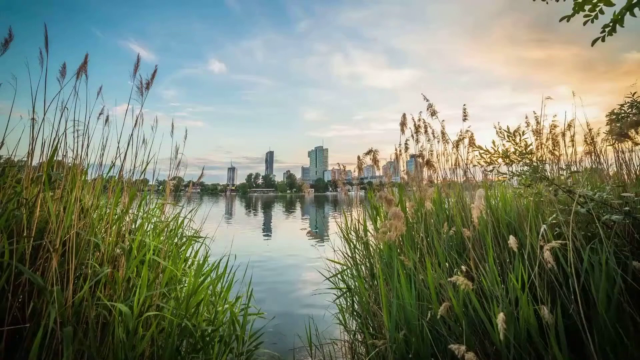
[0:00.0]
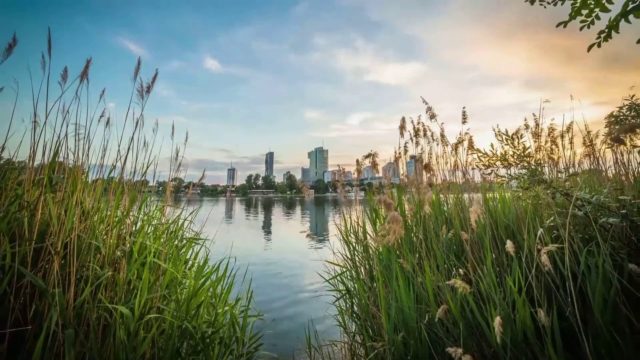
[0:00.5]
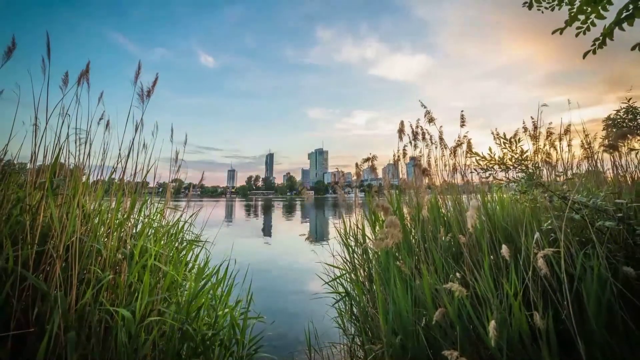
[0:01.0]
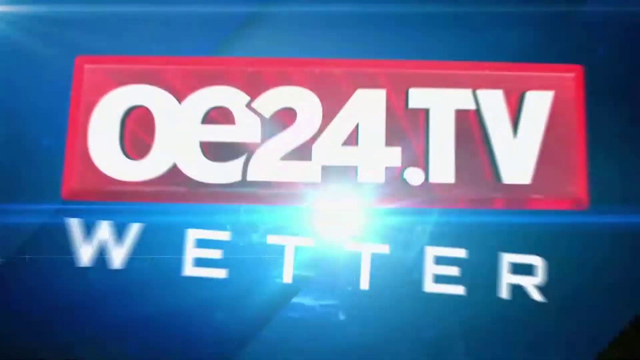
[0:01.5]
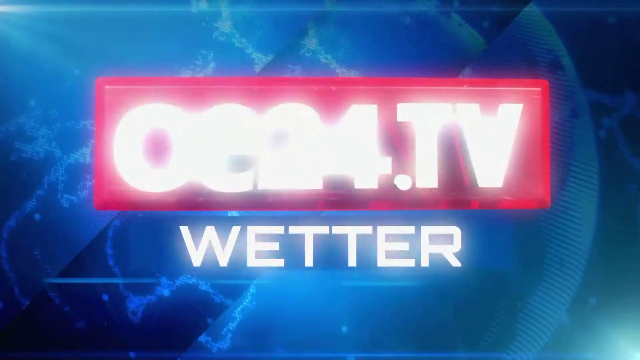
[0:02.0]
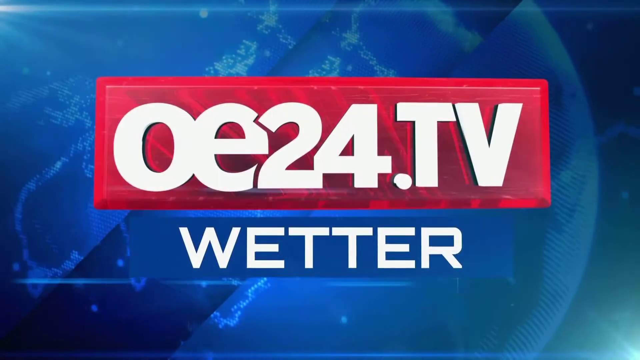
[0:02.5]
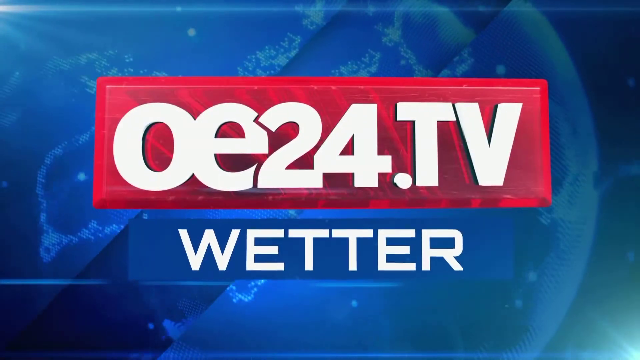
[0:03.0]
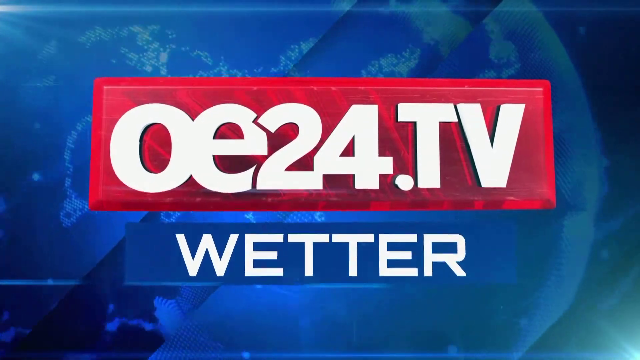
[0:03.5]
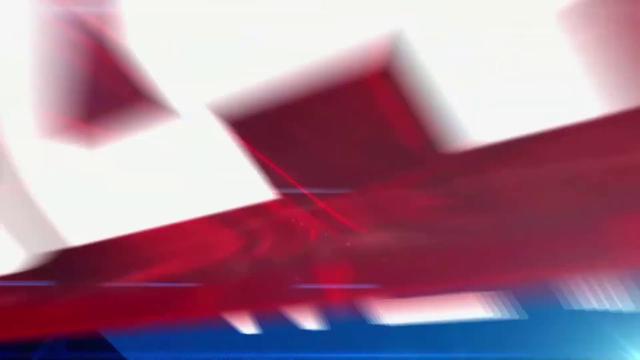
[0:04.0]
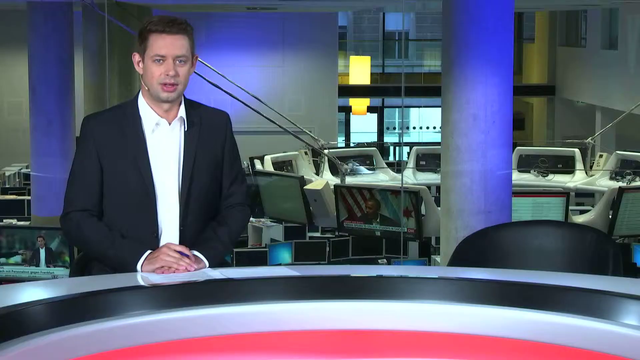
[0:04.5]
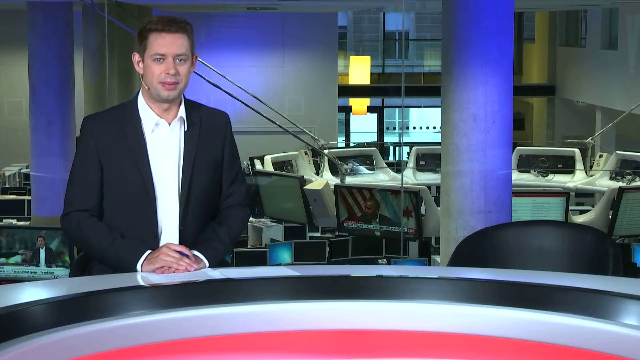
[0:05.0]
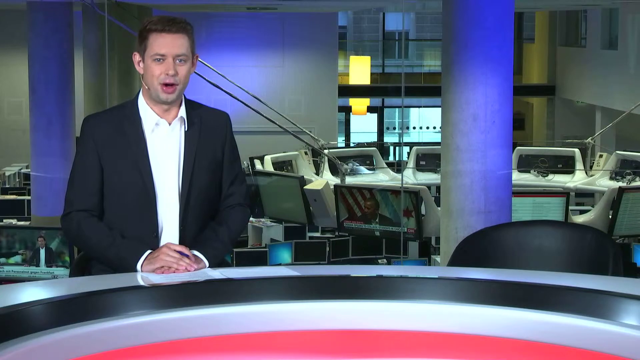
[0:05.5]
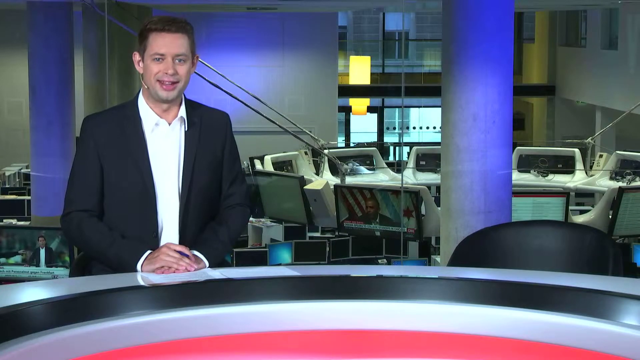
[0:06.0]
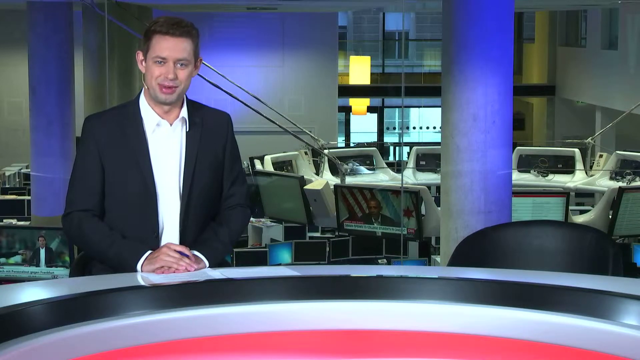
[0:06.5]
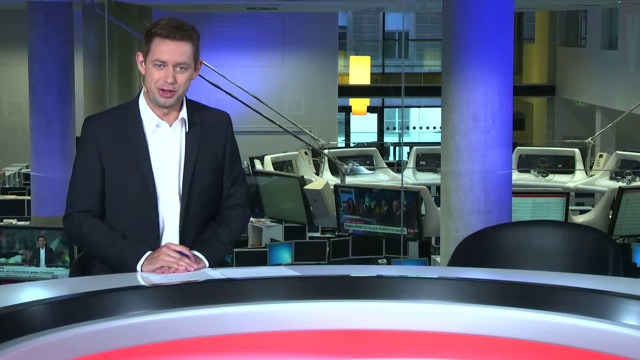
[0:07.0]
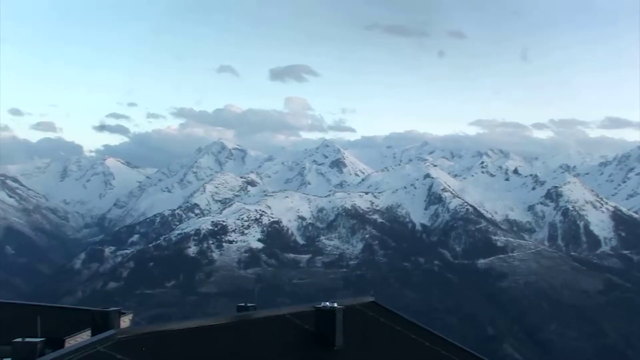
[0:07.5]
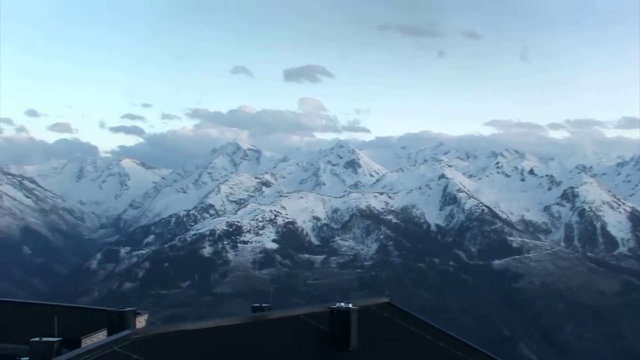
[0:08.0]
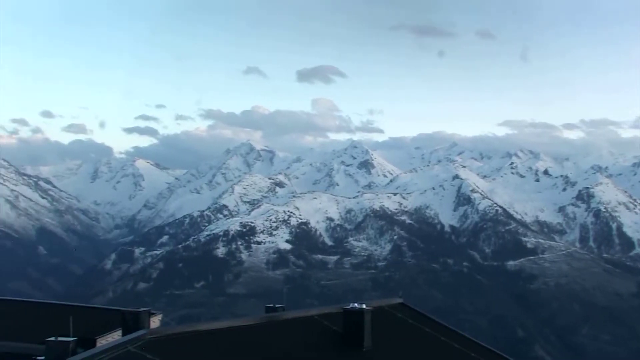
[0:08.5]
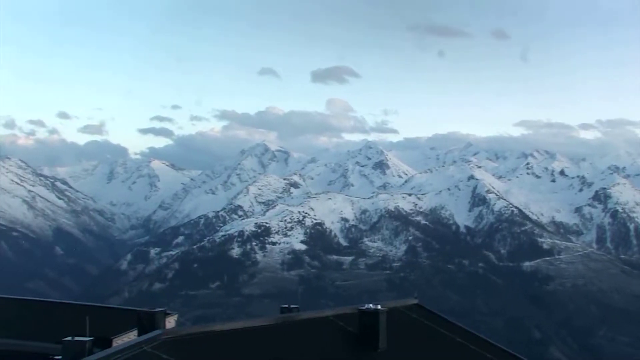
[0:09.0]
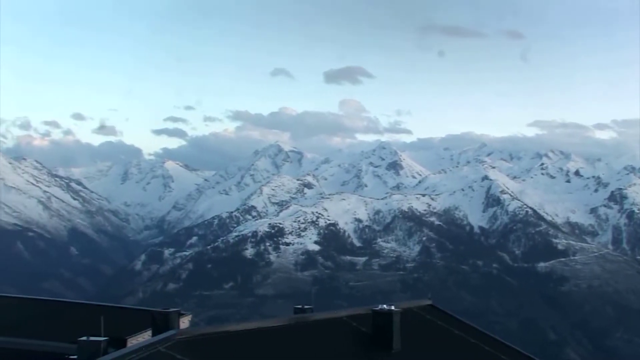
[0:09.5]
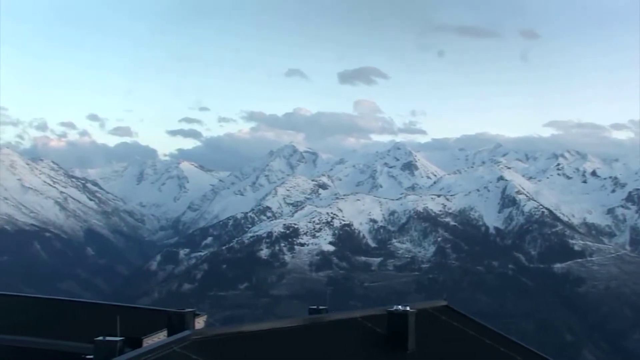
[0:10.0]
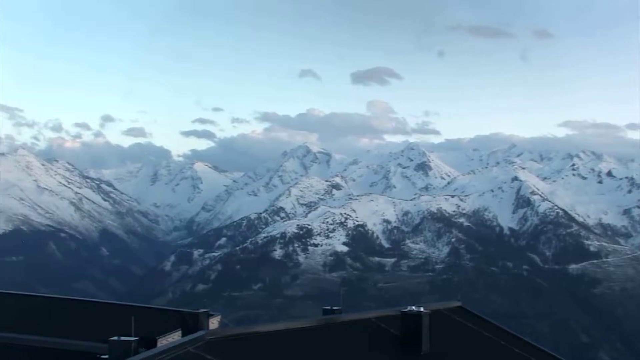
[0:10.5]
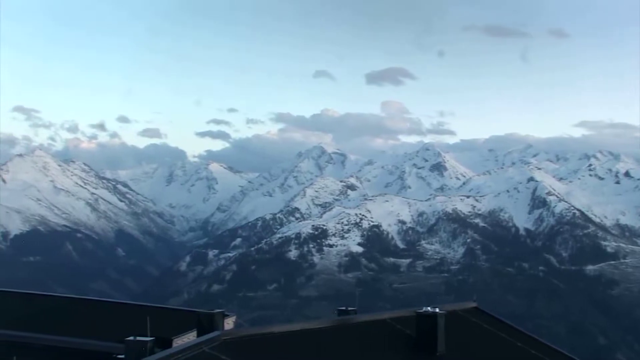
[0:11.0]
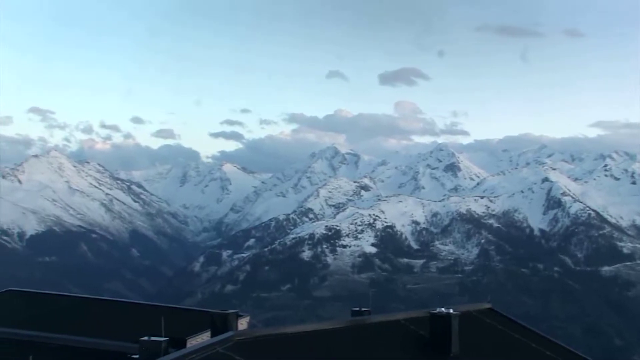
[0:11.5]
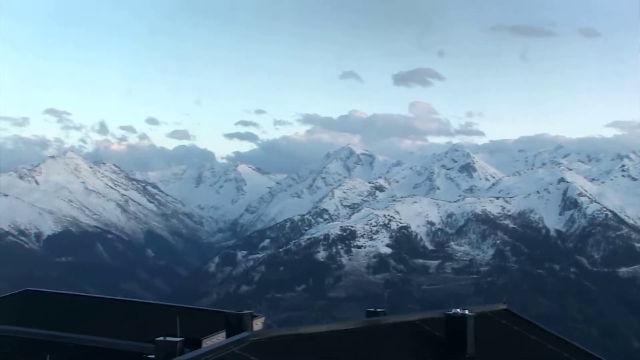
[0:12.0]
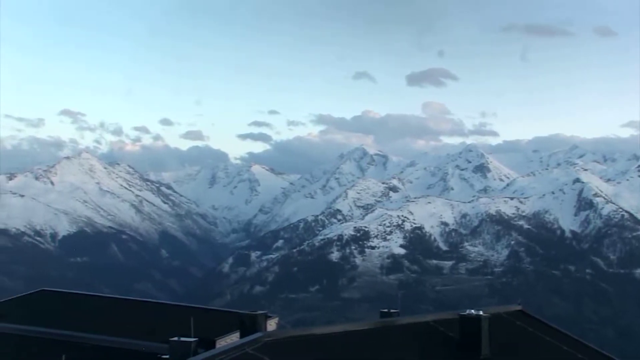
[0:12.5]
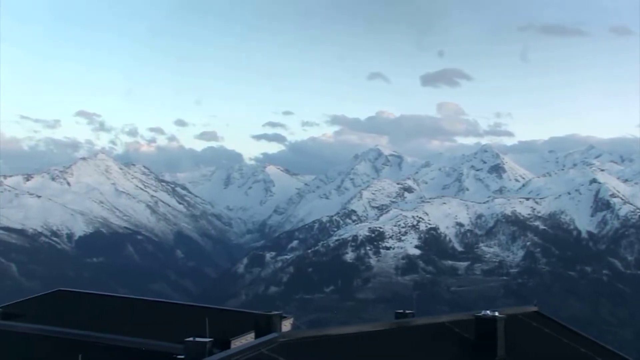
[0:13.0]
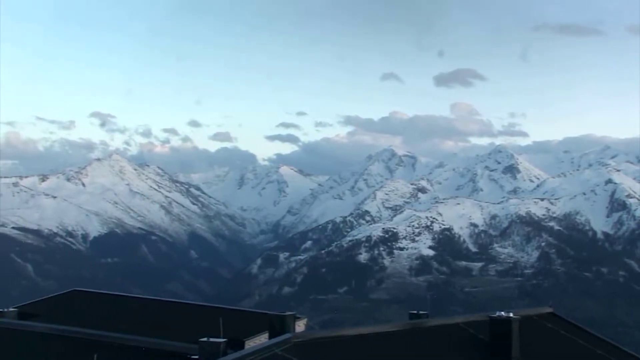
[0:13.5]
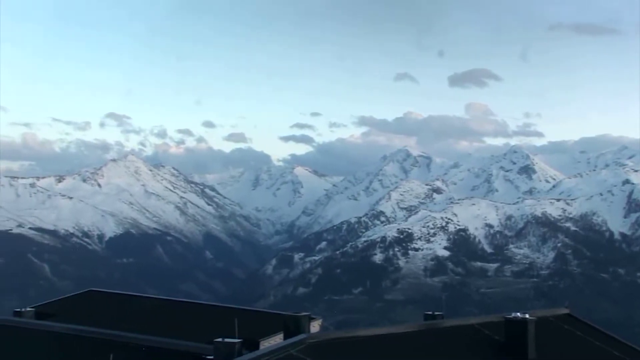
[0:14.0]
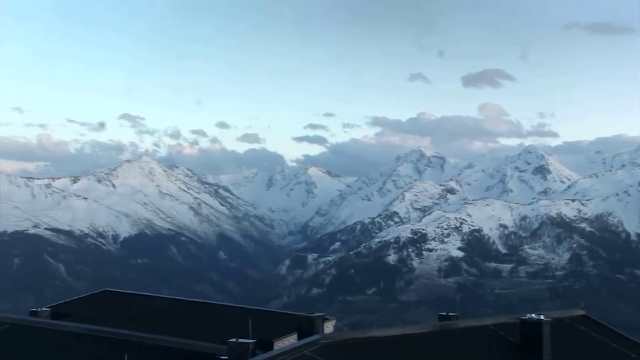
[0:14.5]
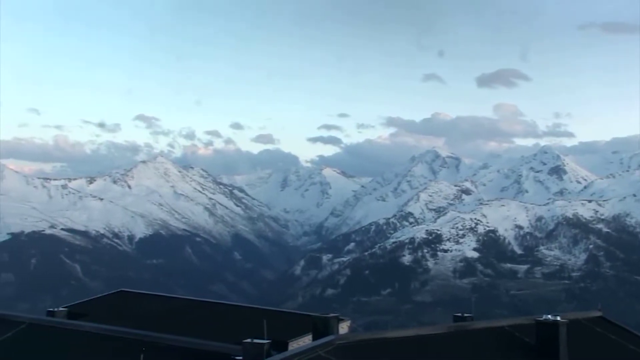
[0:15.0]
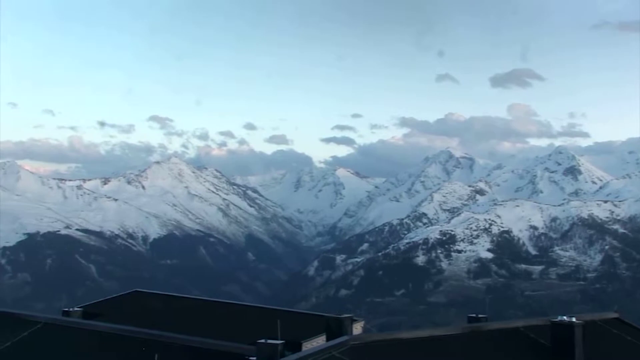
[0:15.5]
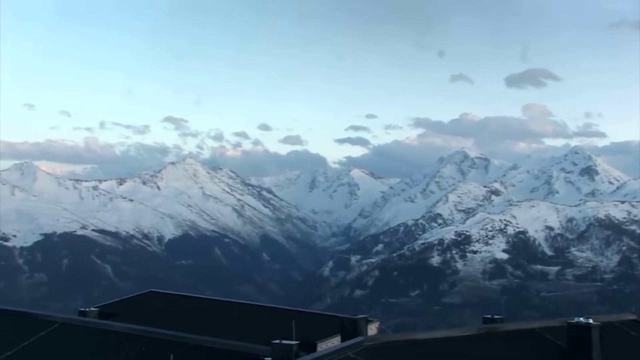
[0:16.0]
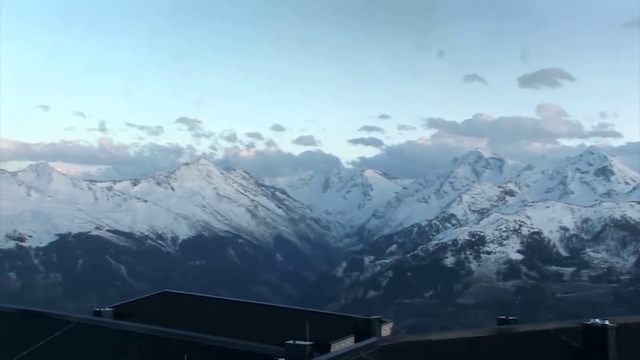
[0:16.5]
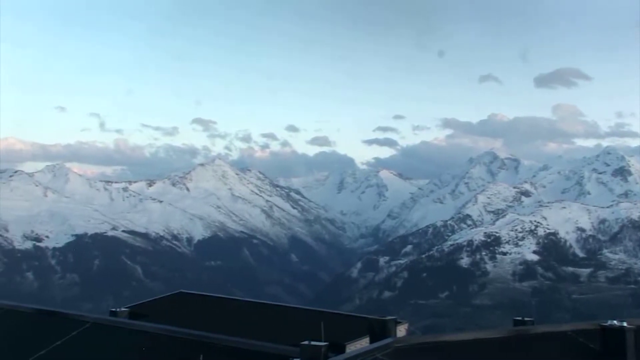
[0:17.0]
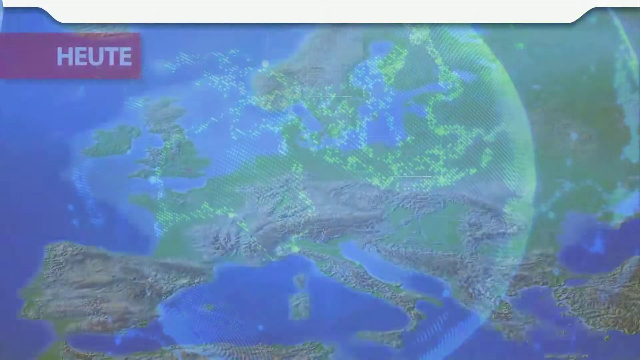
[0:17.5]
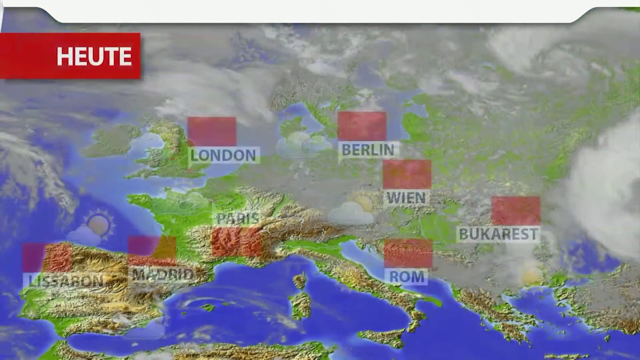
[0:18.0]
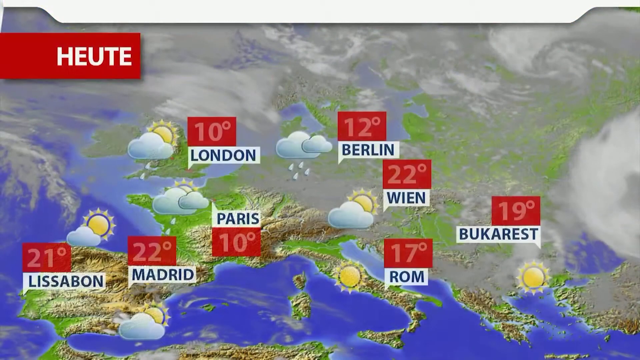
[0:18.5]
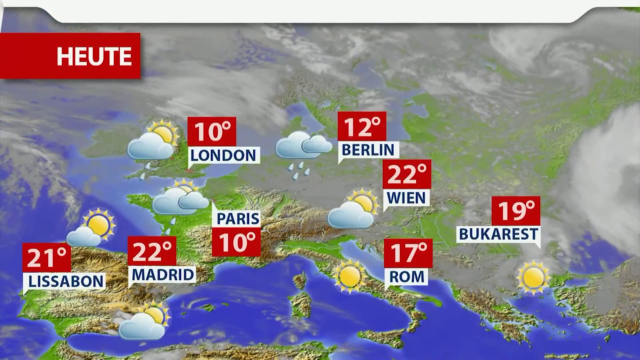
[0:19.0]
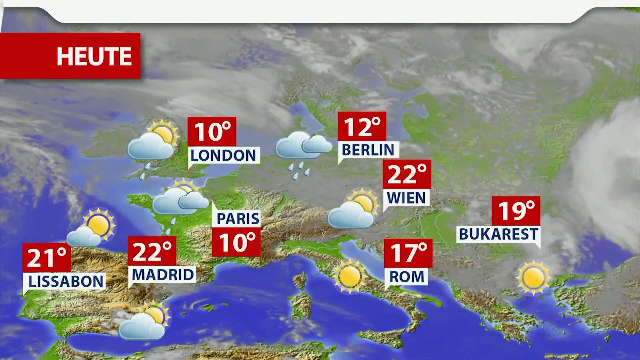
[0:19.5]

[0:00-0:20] A nature scene shows grown grass and a river, with long buildings whose reflection can be seen in the river. The news comes from the company oe24.tv weather. A man in a studio wears a black coat and a white shirt, with a small microphone that goes around his ears and short black hair; the background looks like a studio or the office of the news company. A mountain covered with a lot of ice is shown, and the weather is cold. A map with different countries is visible.